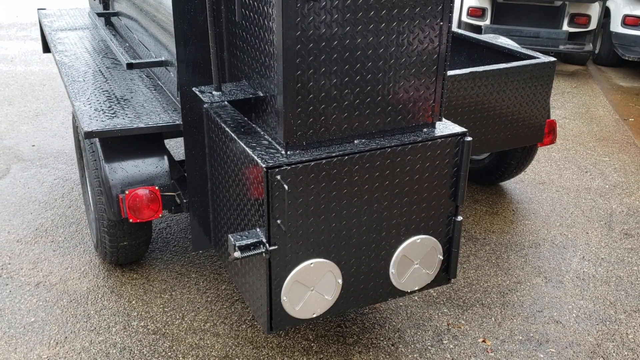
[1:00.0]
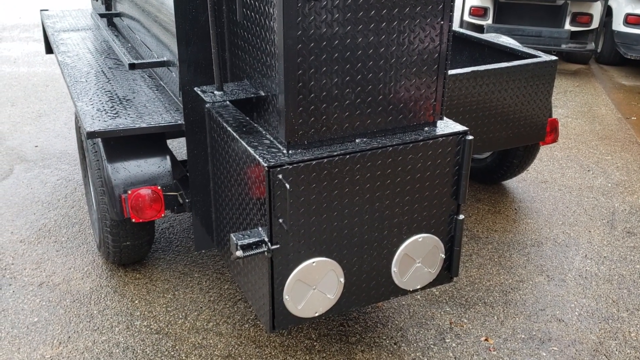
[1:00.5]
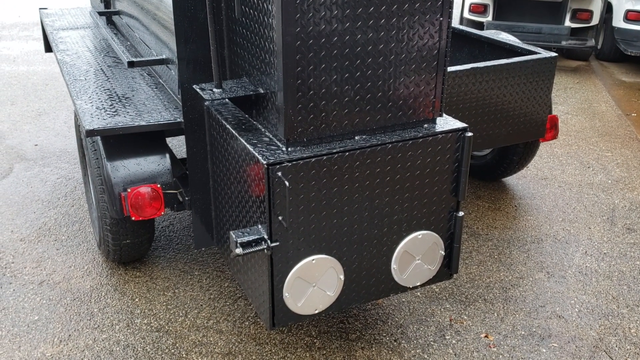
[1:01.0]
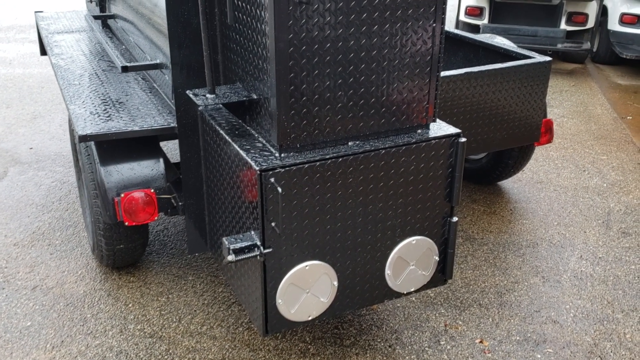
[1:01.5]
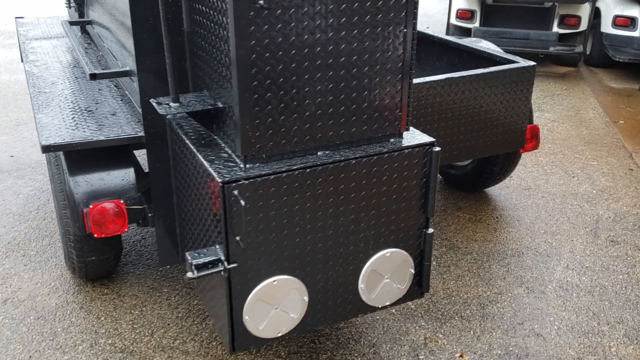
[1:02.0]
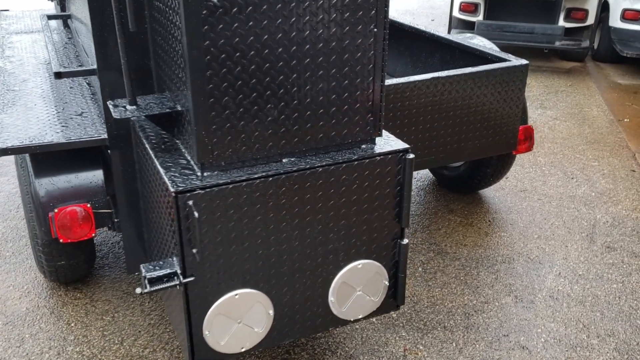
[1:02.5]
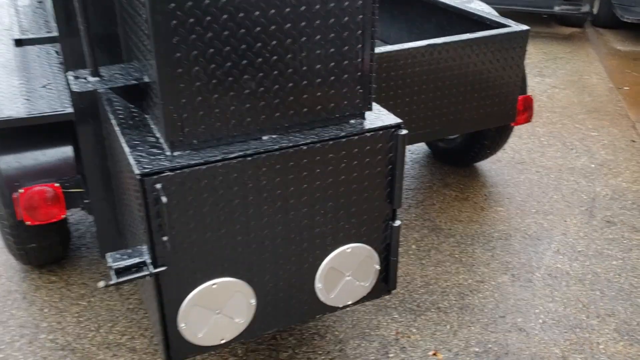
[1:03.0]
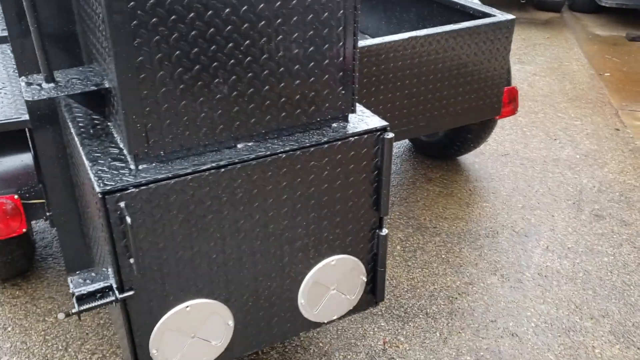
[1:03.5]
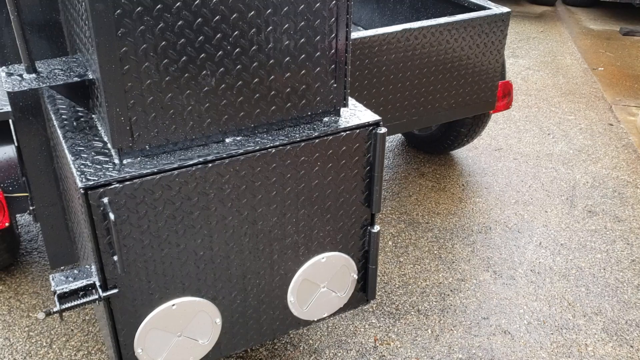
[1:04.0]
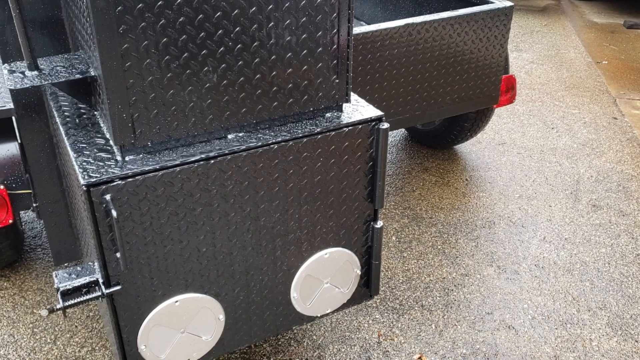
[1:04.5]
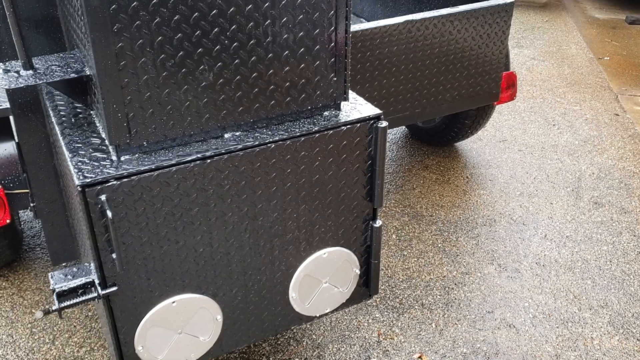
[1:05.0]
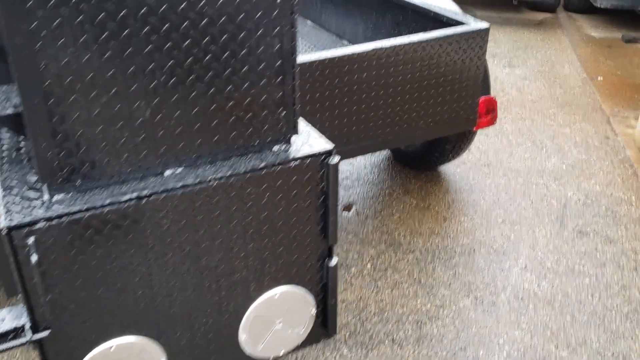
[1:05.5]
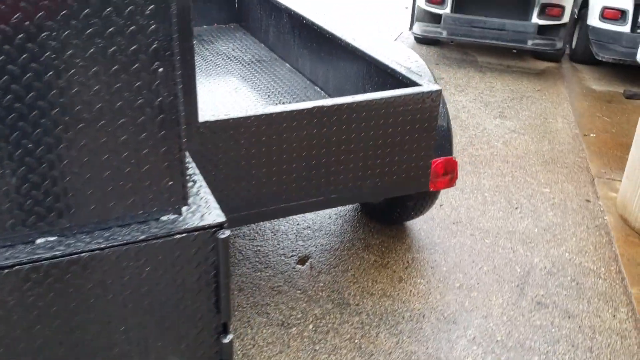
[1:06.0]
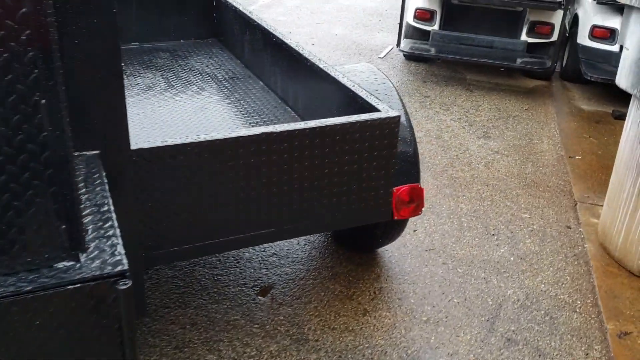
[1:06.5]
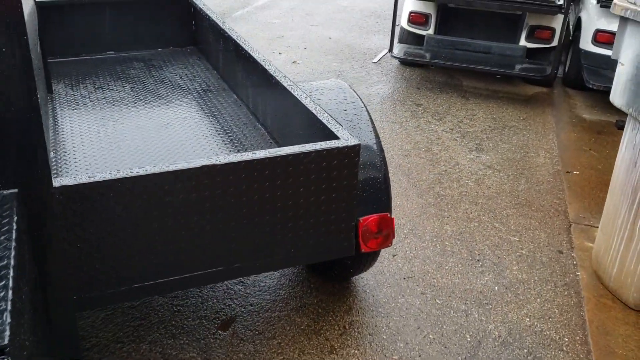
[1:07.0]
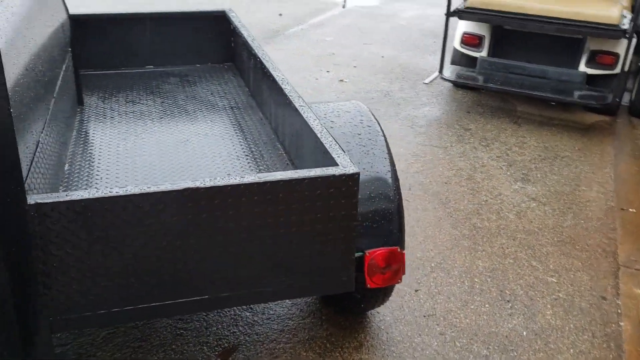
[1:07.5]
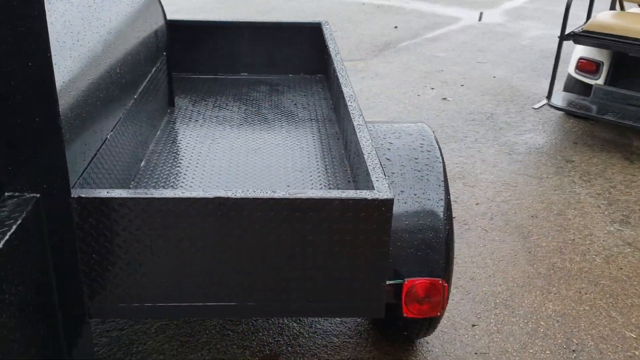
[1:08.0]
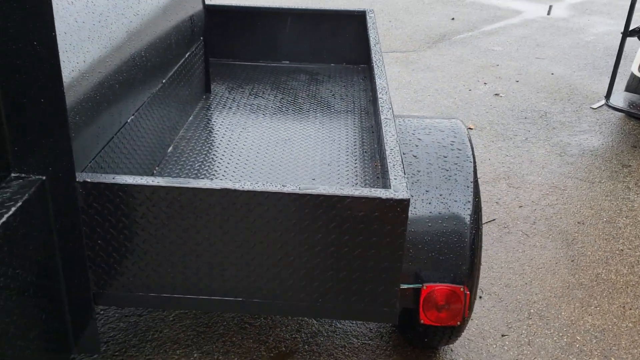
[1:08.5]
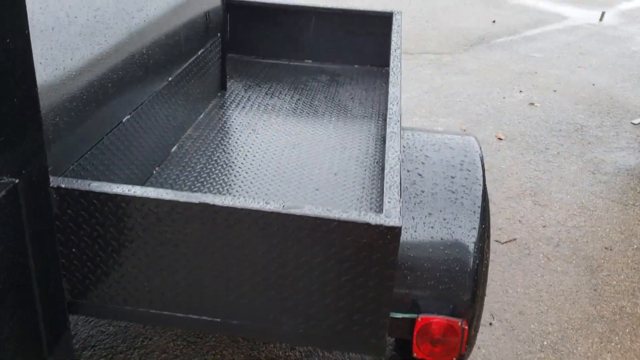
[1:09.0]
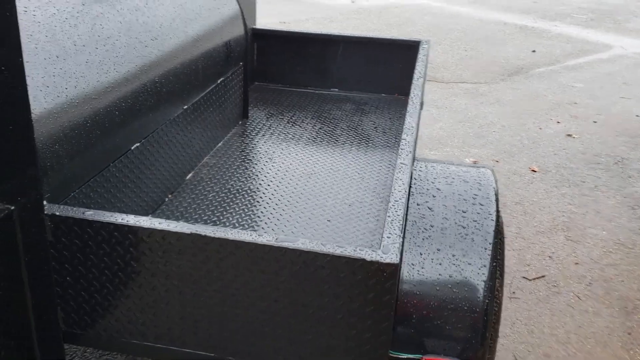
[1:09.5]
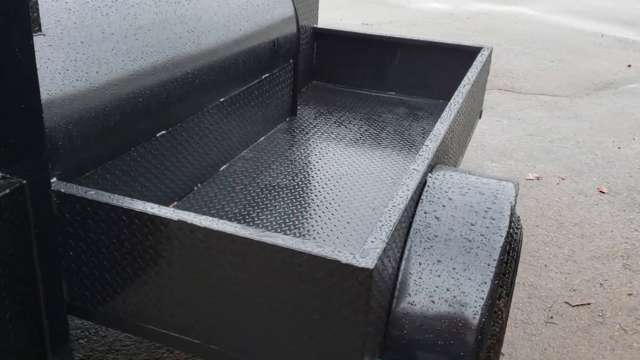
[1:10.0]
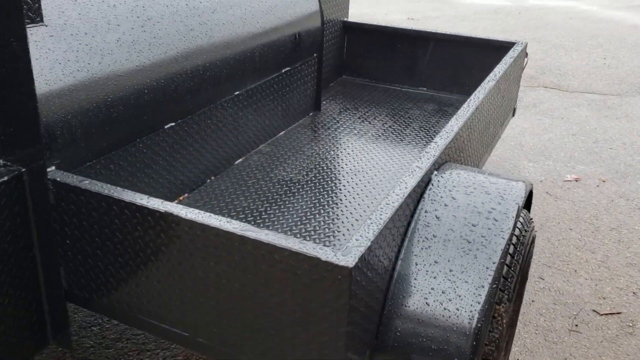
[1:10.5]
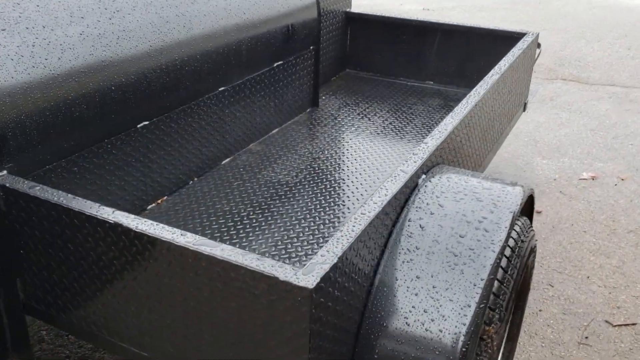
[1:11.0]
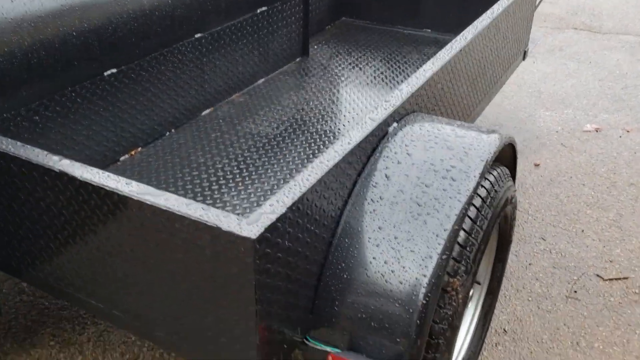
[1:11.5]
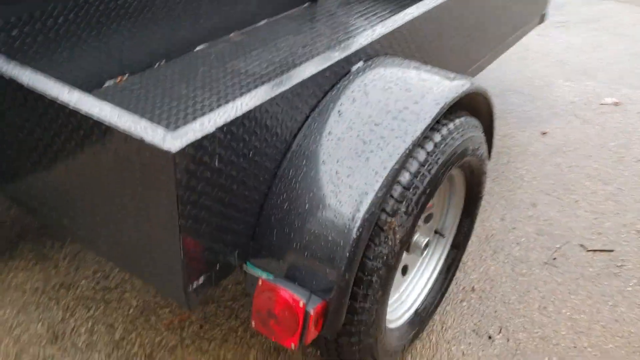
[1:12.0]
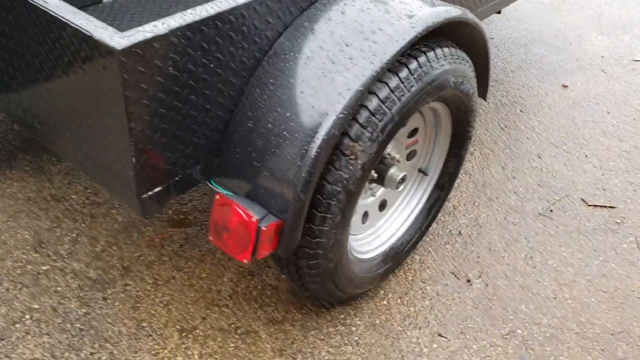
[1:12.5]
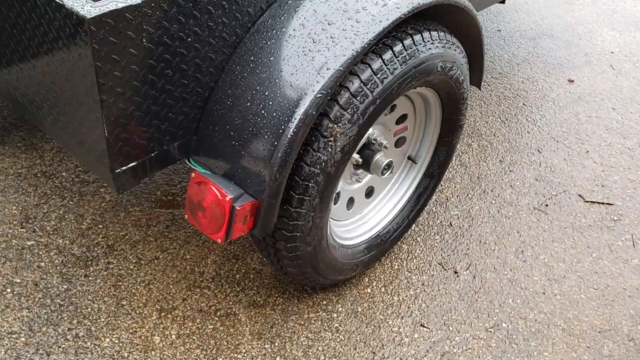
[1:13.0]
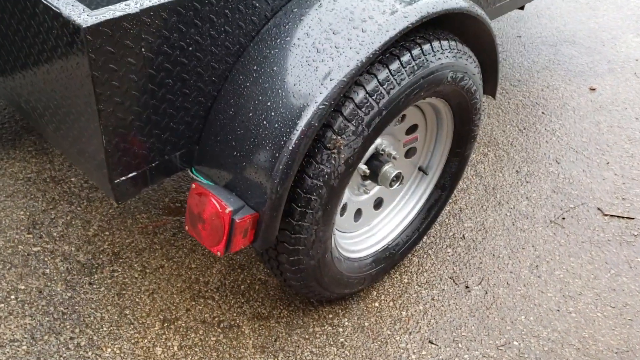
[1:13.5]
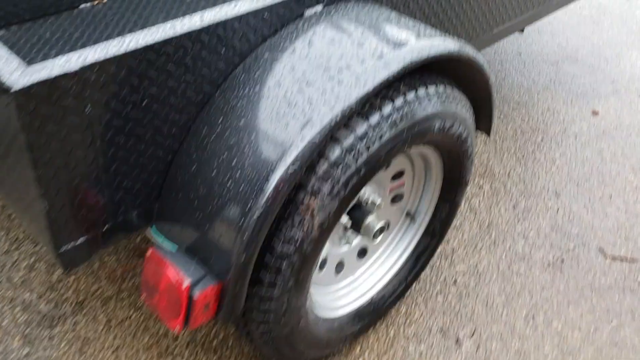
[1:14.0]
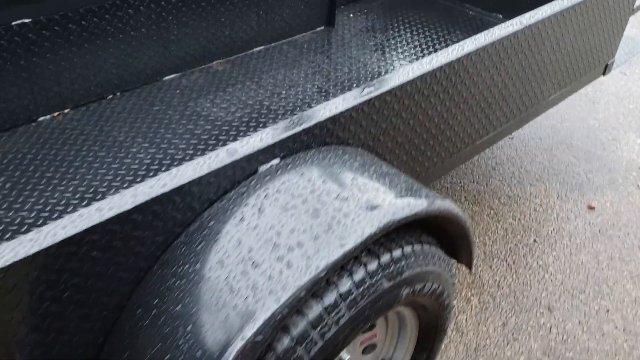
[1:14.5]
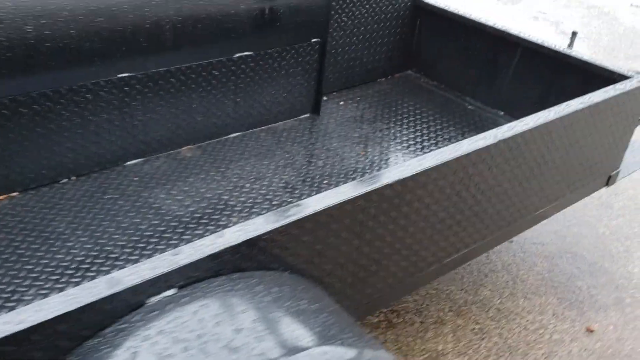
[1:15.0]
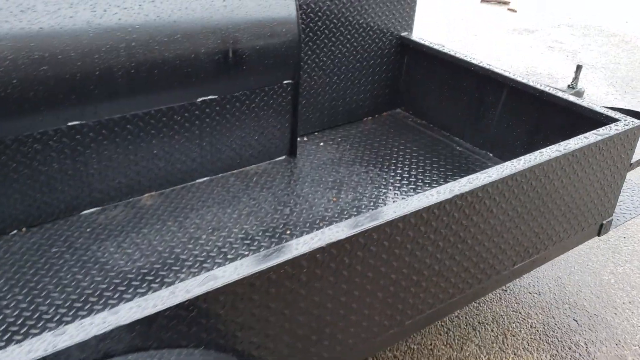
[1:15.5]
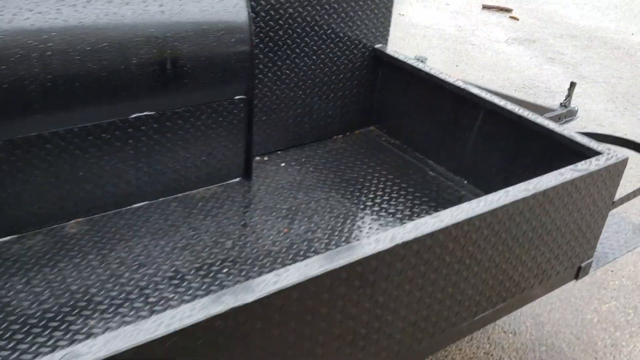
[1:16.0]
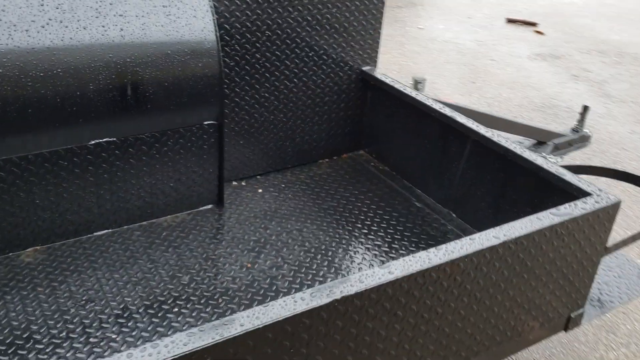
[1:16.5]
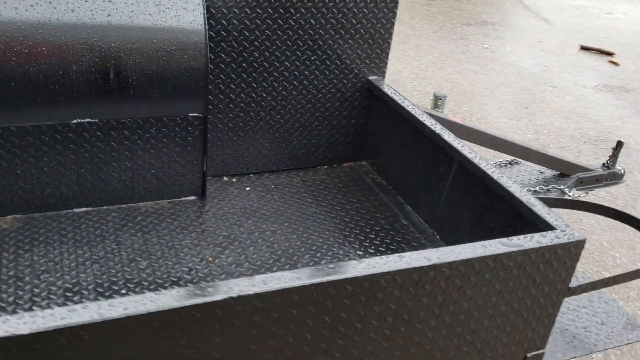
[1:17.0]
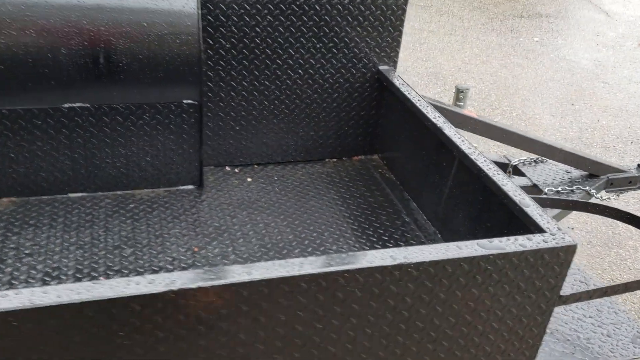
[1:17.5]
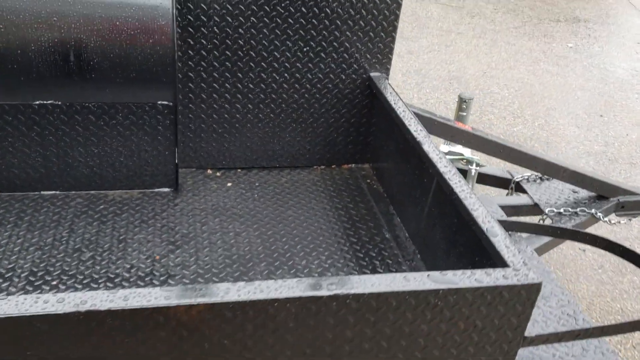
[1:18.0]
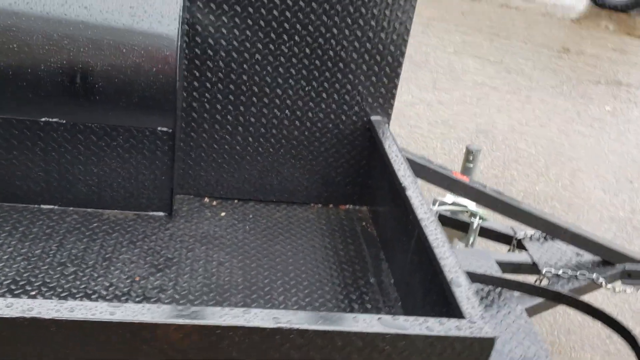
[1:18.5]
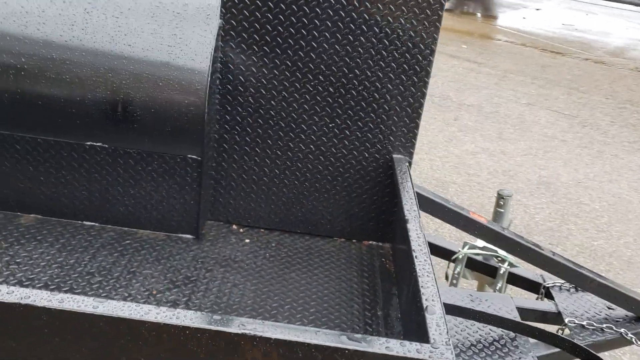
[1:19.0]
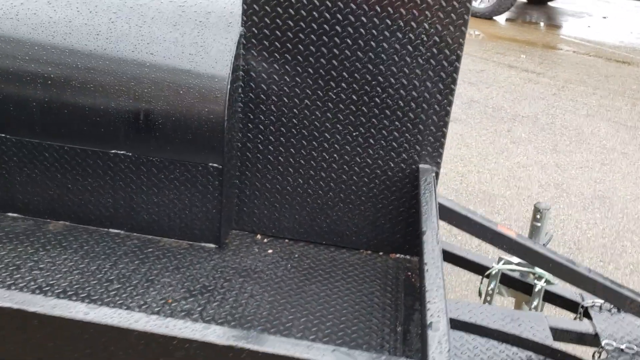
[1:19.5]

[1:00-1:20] The braai stand that looks like a trailer stands still outside the storeroom, with two other golf cars that have white seats. A white rubbish bin looks like it has been painted white and gray, and a reddish or pink chair stands in front of the door, with a yellow container at the back of the chair. Inside the storeroom the other trailer stands still, along with other materials. The trailer has red lights and a space, apparently for putting plates, pots and similar things. A blue van is on the other side, and other golf cars are on the other side of the storeroom. There is a tar road where cars are passing. The floor looks wet, as if it was raining, and there are water droplets on top of the trailer.